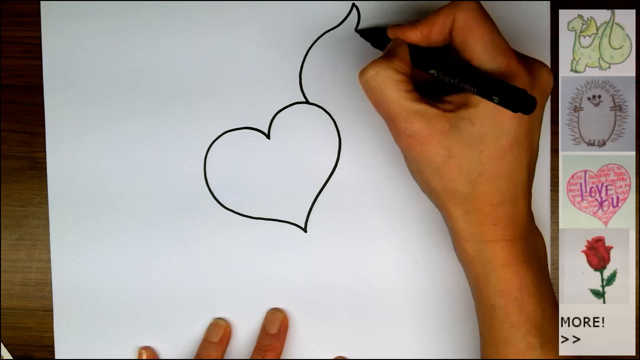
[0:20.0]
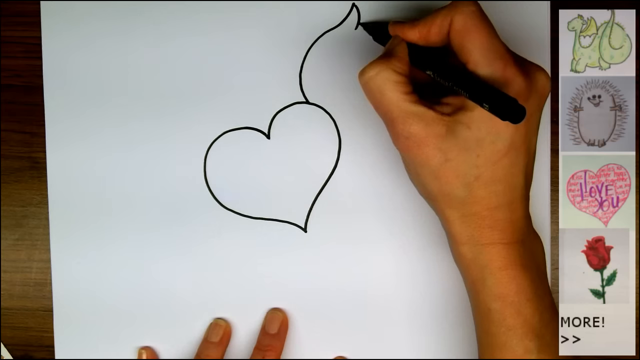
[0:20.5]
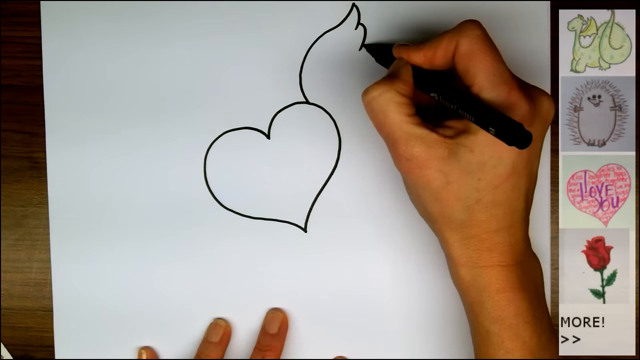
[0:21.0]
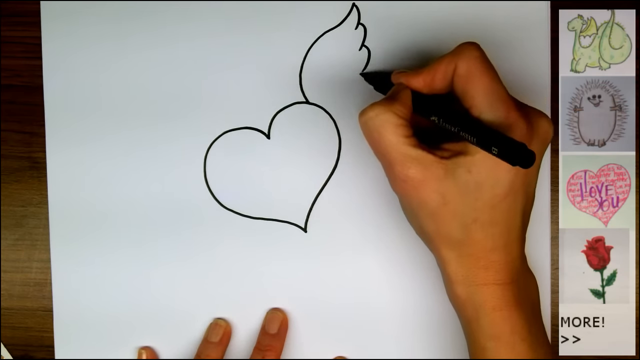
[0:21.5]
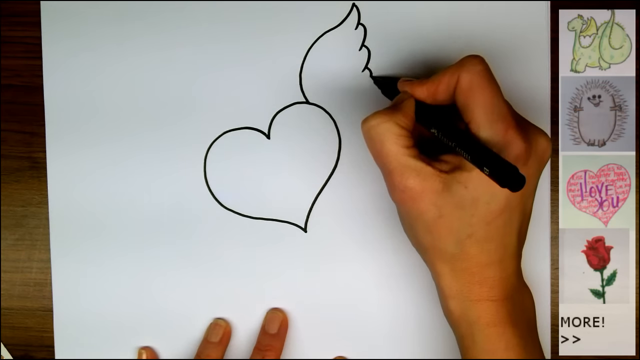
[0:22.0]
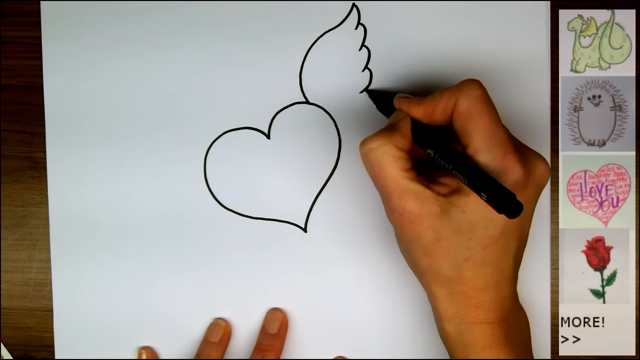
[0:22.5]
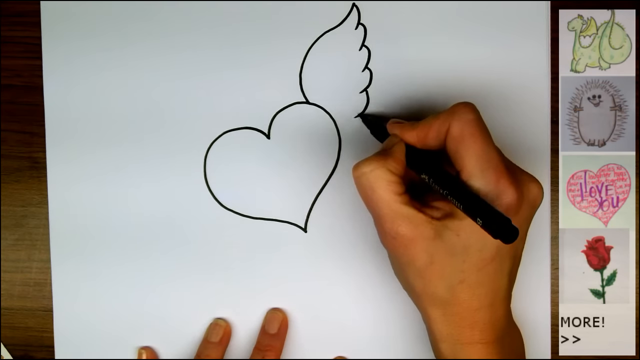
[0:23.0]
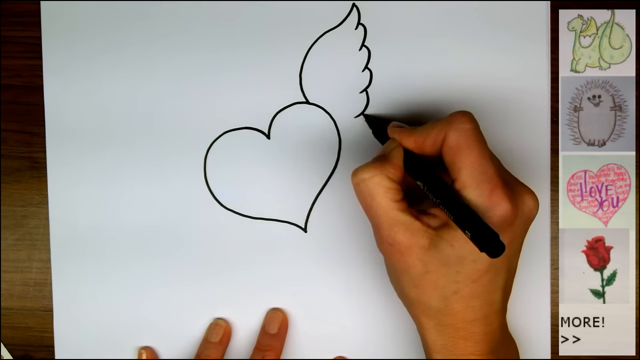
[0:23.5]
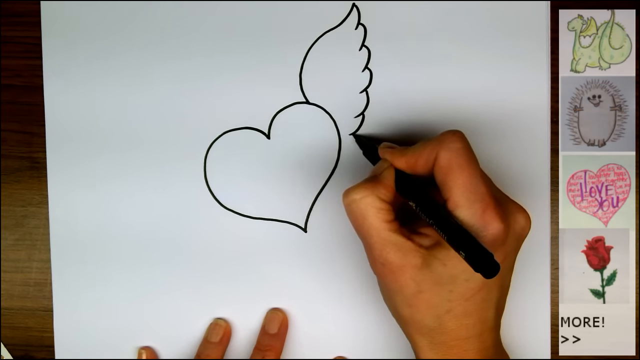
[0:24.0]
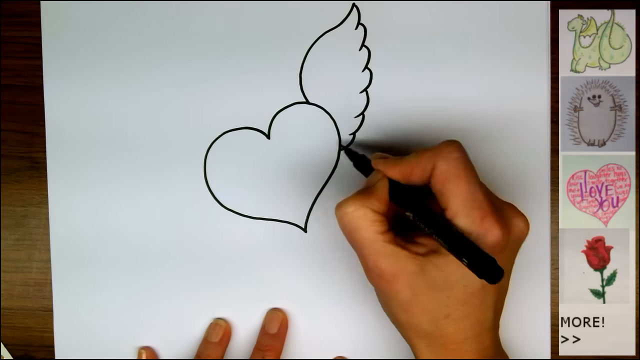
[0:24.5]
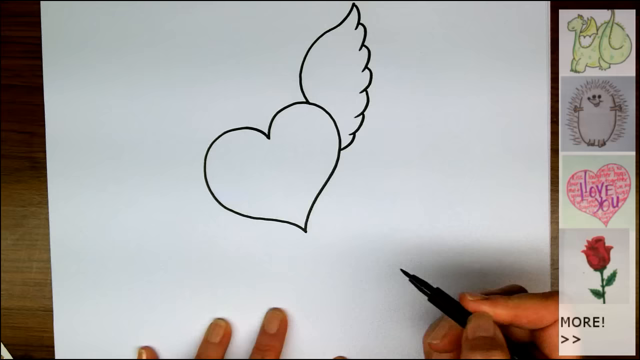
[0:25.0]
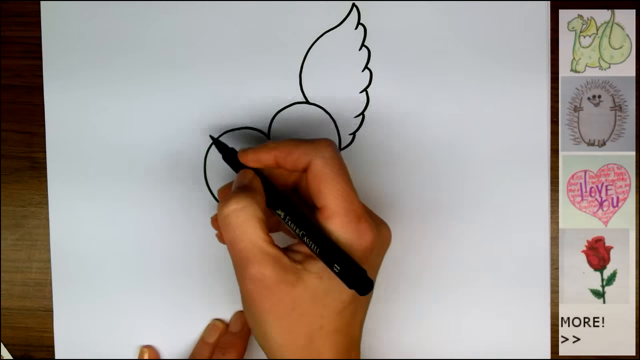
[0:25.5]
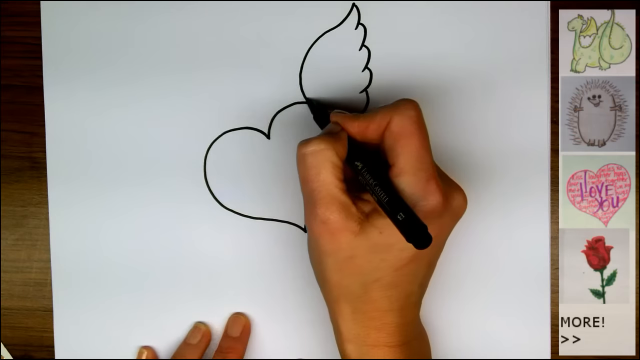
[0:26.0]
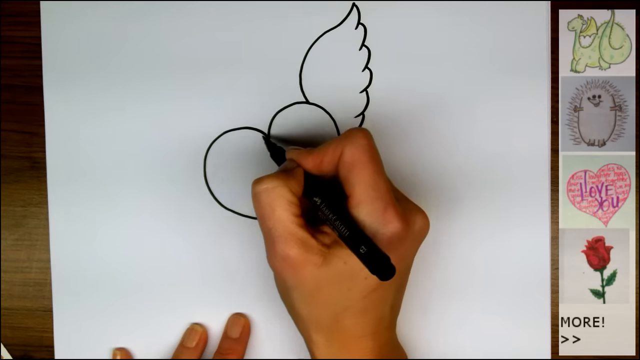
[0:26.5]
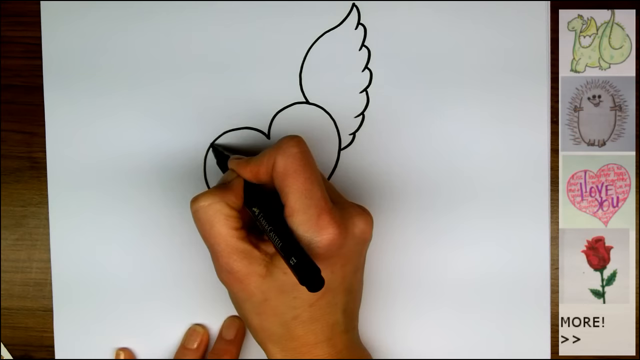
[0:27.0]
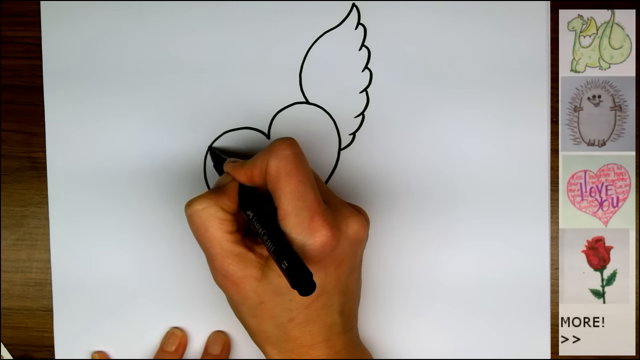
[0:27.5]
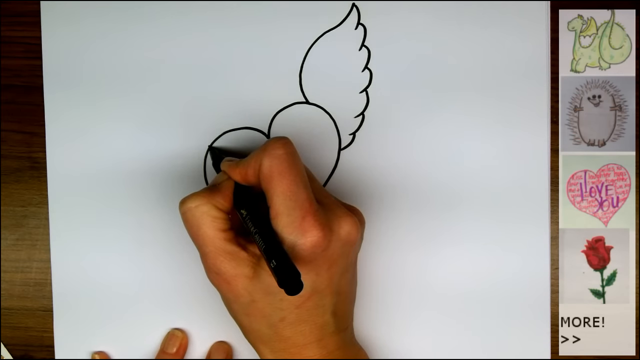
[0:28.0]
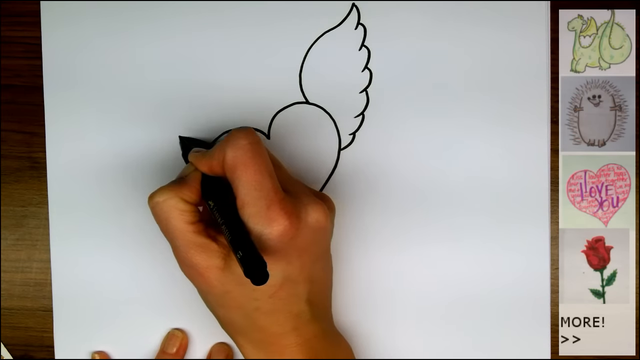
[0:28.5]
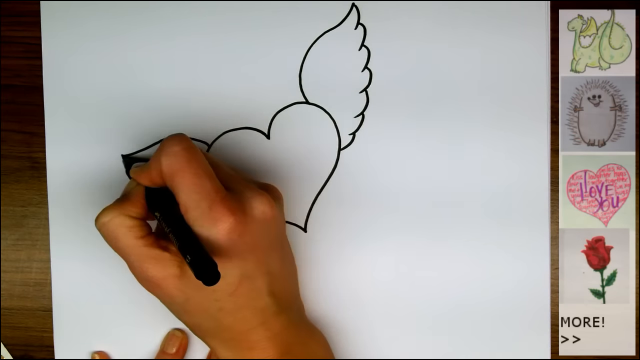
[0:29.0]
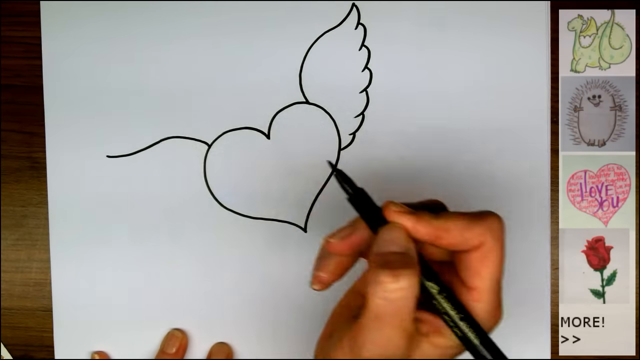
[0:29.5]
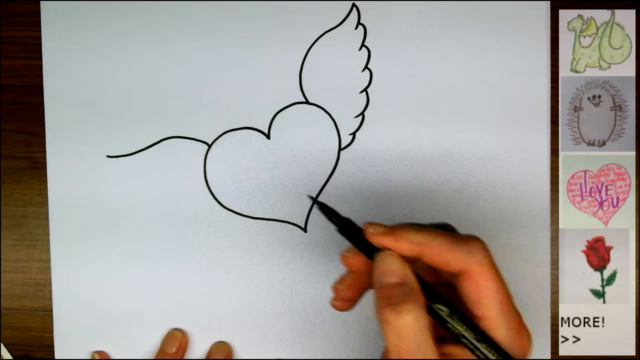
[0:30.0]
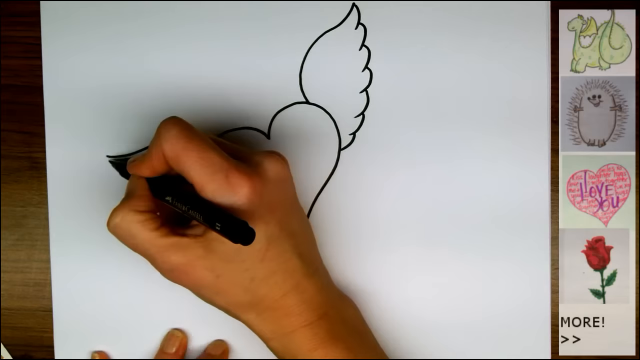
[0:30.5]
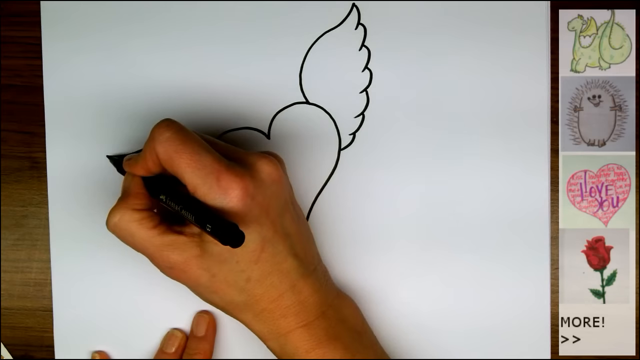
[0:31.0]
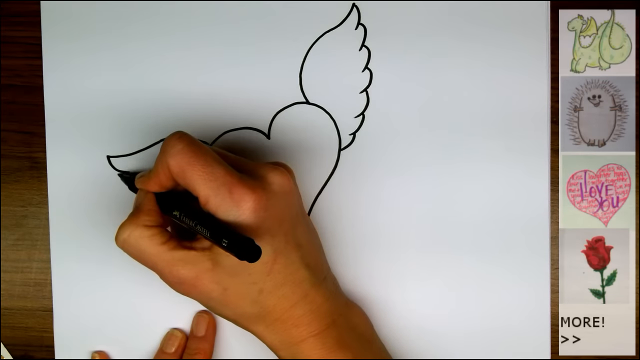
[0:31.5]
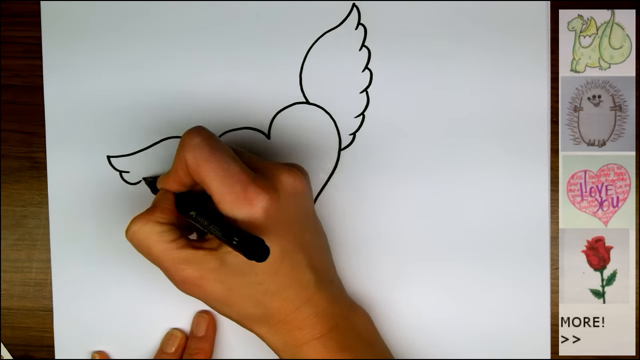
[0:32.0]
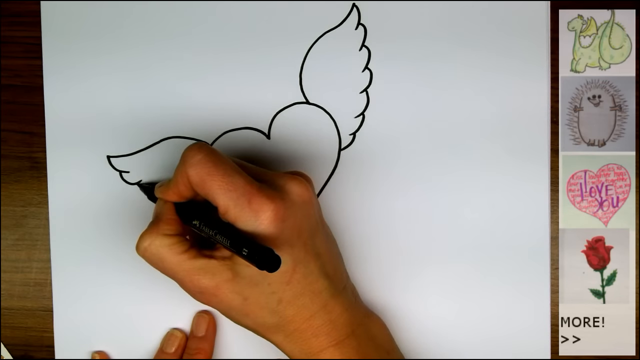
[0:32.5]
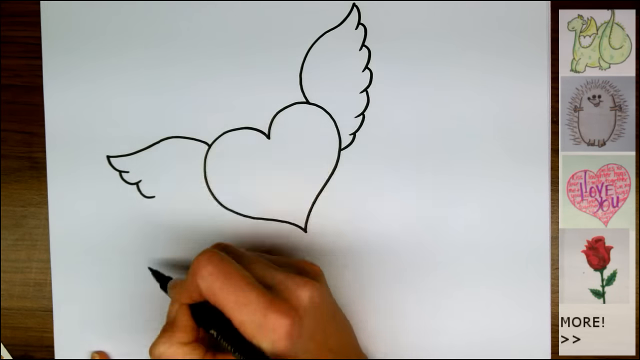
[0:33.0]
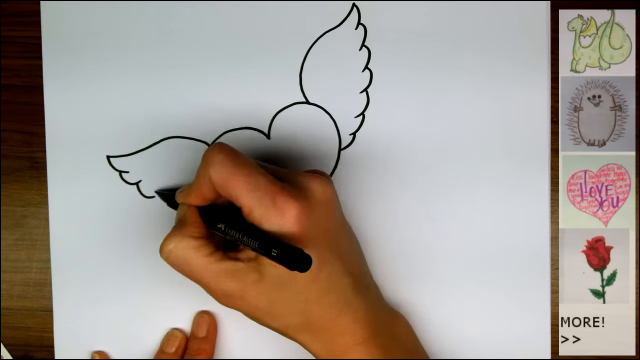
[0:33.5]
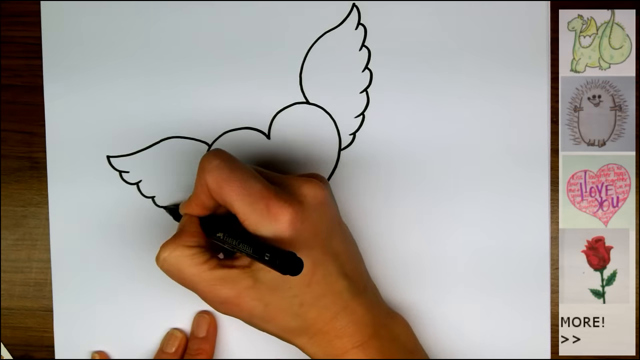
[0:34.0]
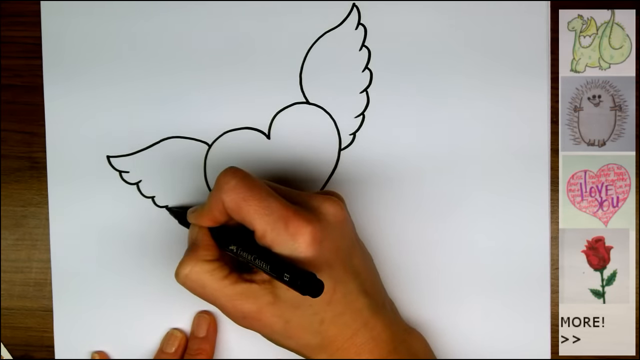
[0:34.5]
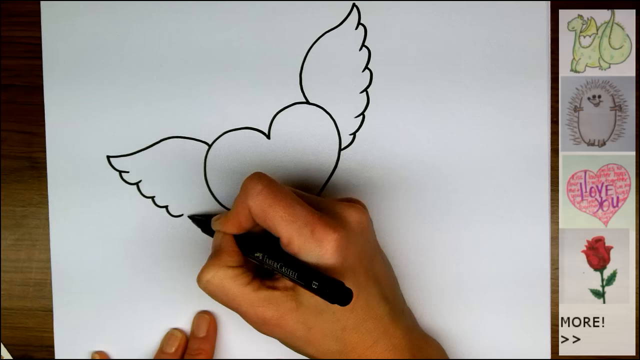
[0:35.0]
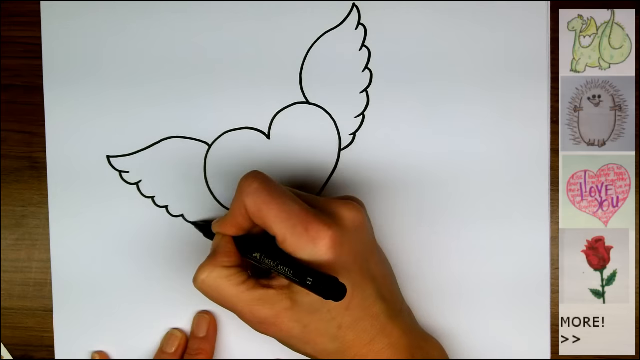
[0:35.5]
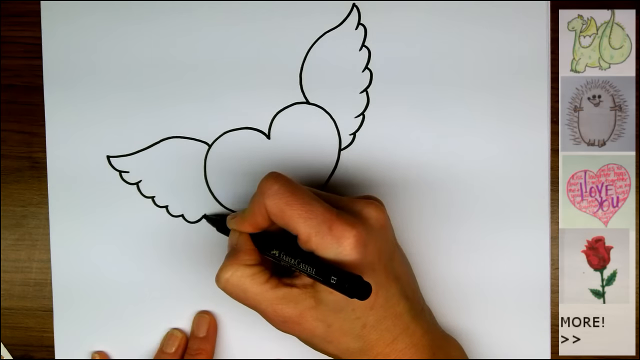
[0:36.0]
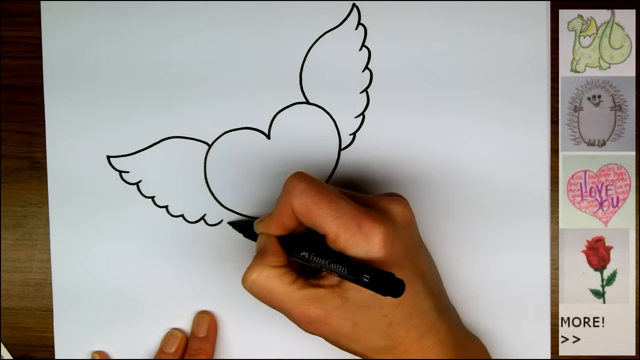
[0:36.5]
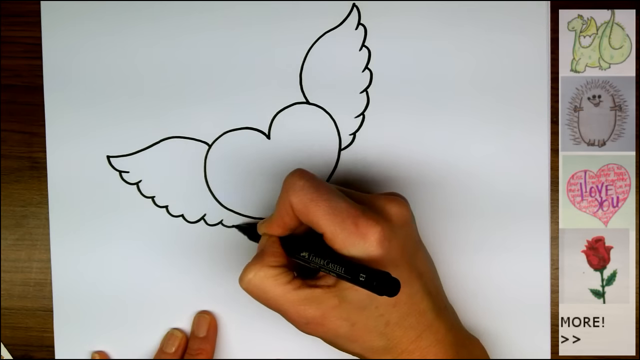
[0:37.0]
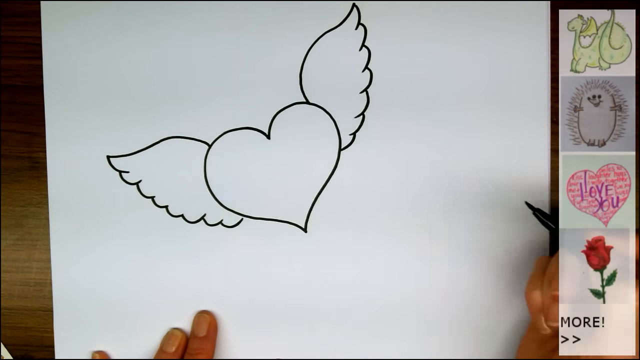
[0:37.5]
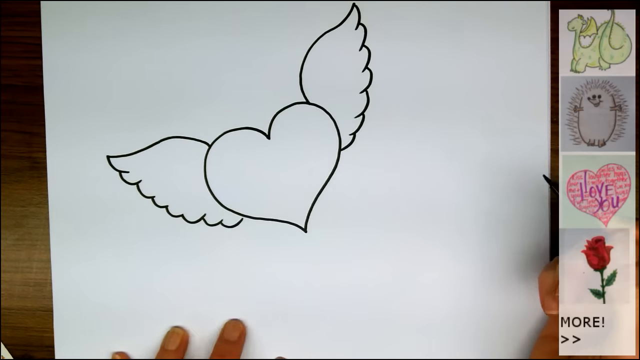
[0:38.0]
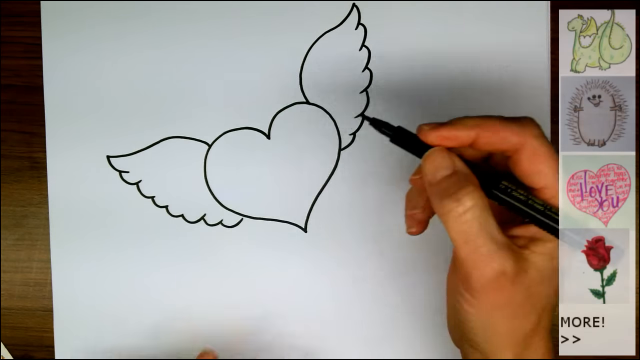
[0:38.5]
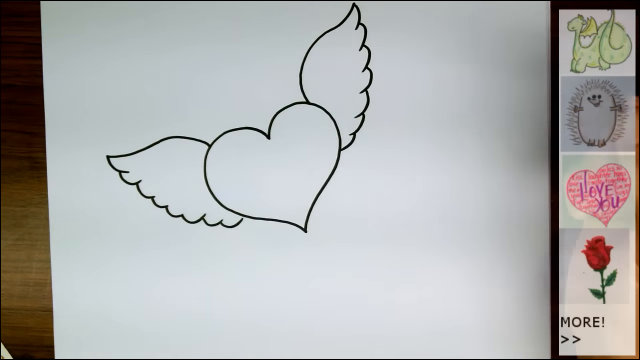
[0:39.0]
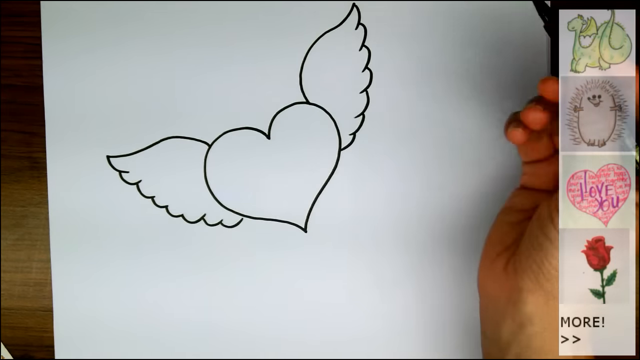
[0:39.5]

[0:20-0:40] The time-lapse continues as a person draws a heart with wings behind it. Only the person's hands are filmed, along with the marker they are using. Their left hand is placed at the bottom of the paper to secure it while they draw. On the right-hand side of the screen are small pictures: a green dragon, a round dog, a pink heart with 'I love you' written in purple, and a red rose. The drawing of the heart with wings looks completely perfect, with no defects, errors or mistakes, and it points diagonally to the left.